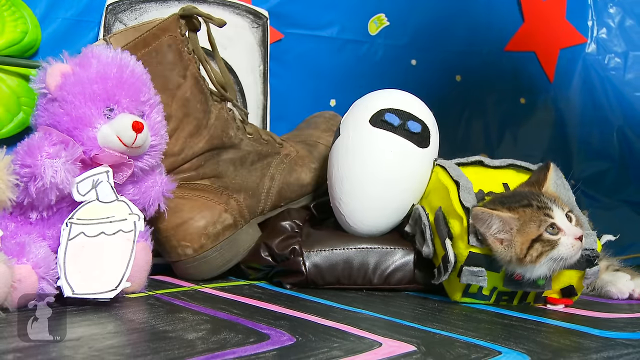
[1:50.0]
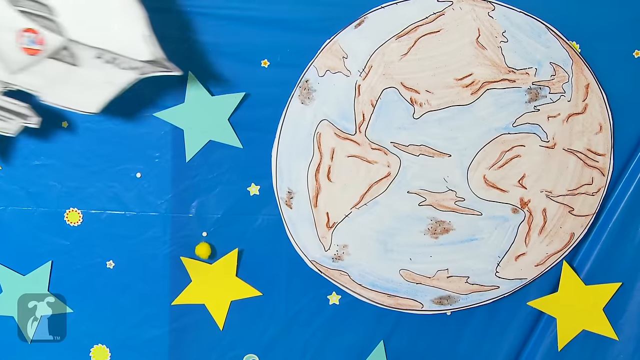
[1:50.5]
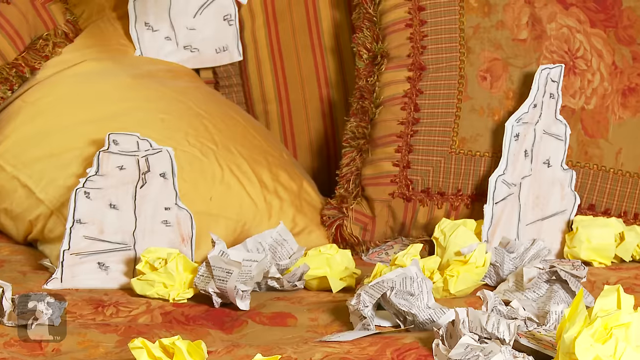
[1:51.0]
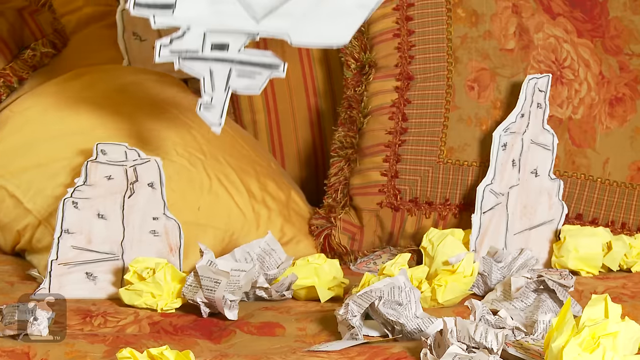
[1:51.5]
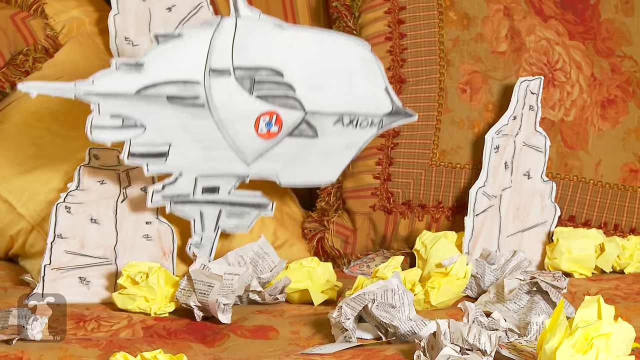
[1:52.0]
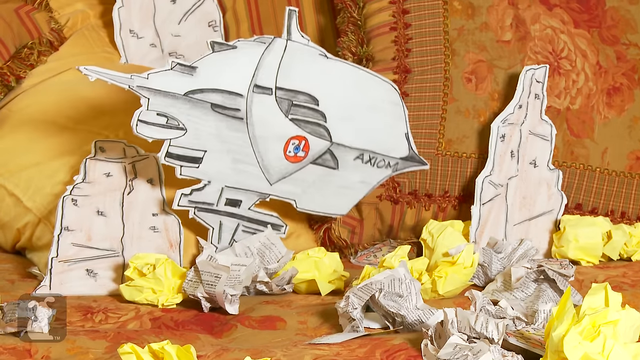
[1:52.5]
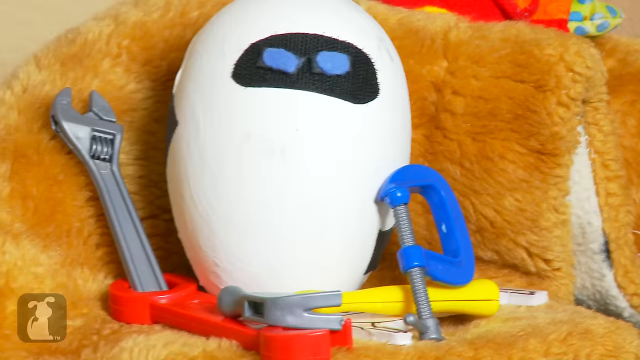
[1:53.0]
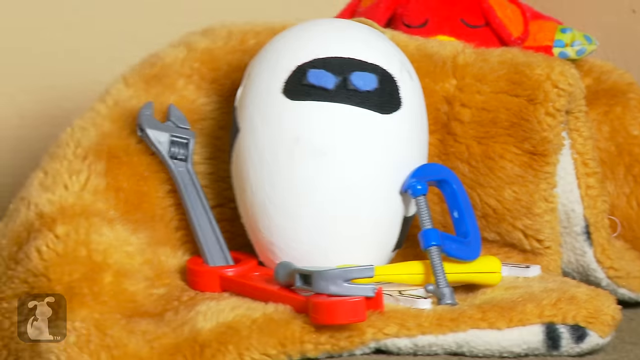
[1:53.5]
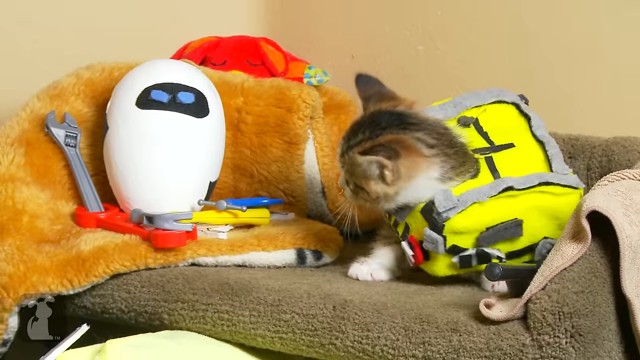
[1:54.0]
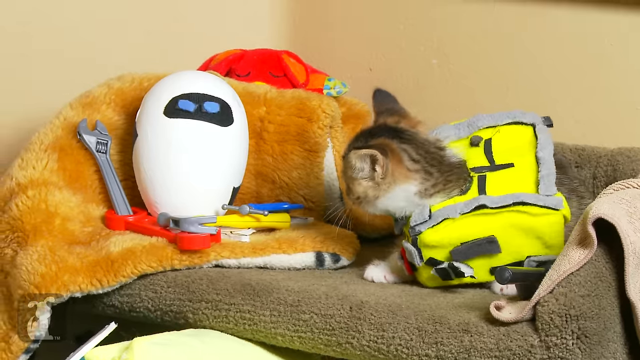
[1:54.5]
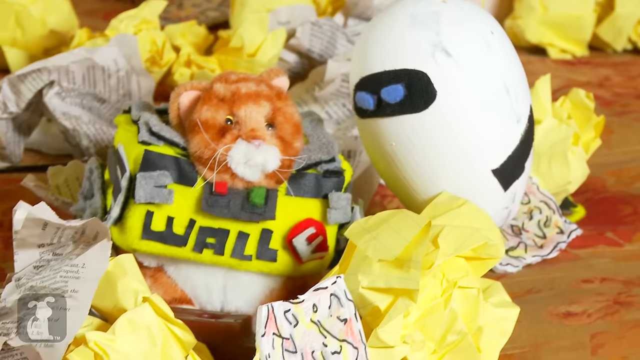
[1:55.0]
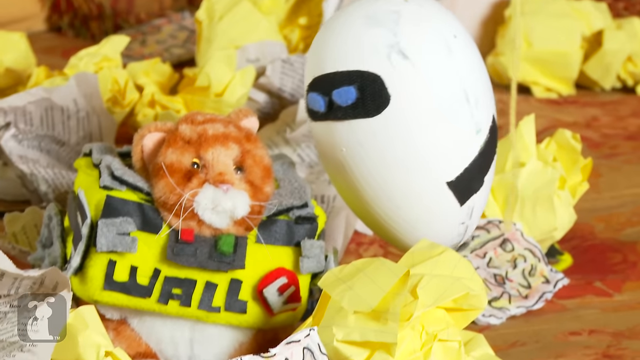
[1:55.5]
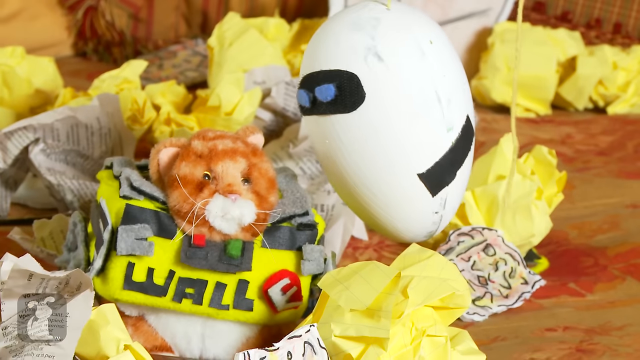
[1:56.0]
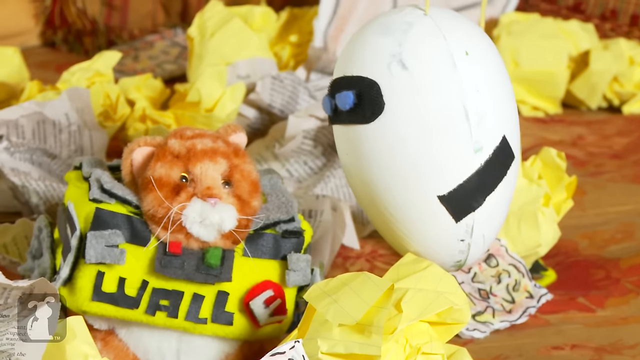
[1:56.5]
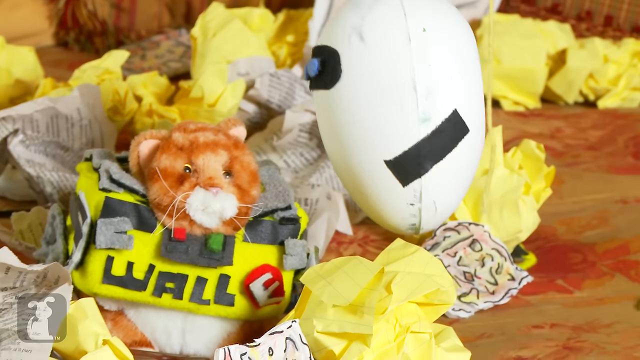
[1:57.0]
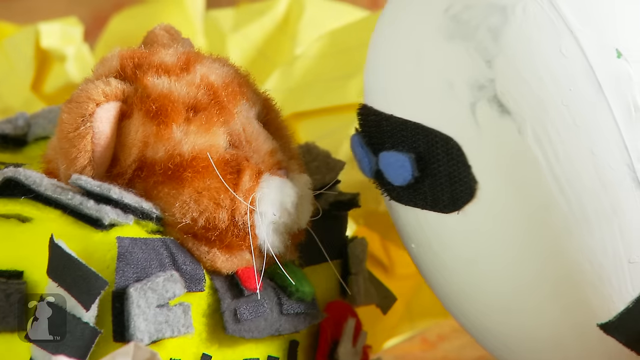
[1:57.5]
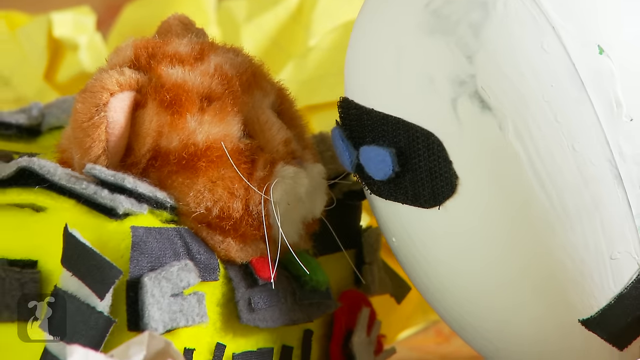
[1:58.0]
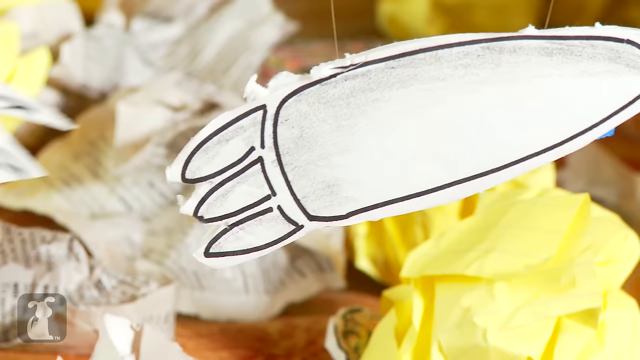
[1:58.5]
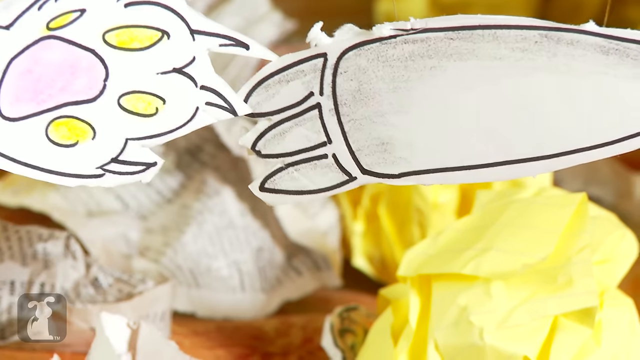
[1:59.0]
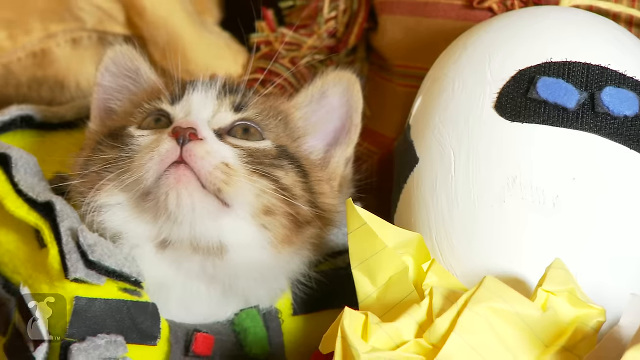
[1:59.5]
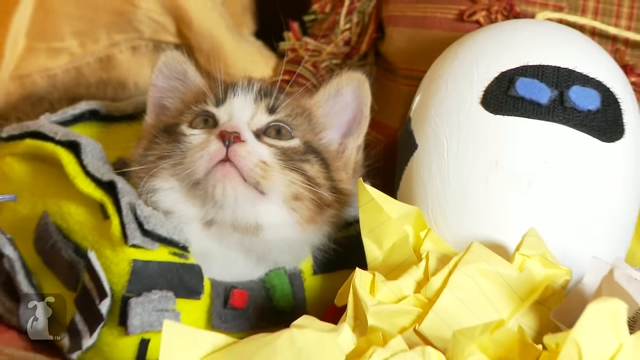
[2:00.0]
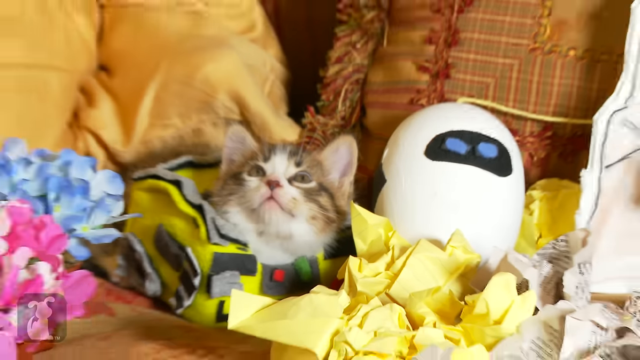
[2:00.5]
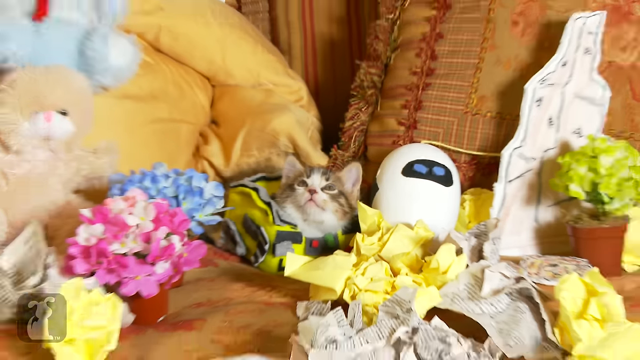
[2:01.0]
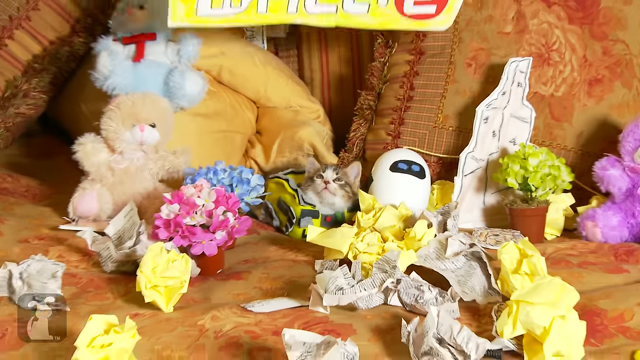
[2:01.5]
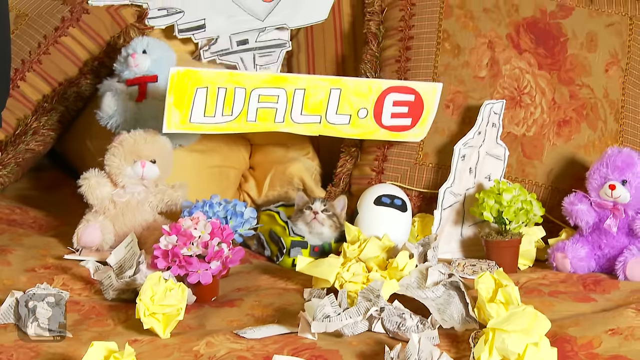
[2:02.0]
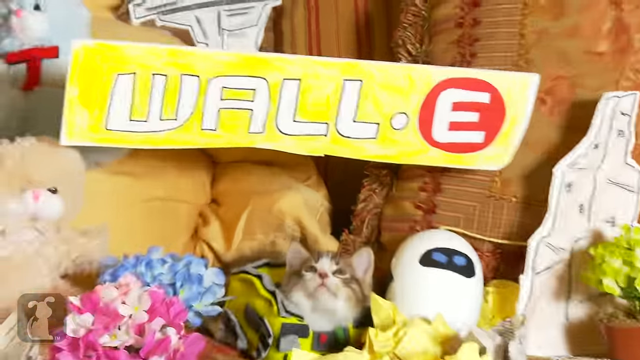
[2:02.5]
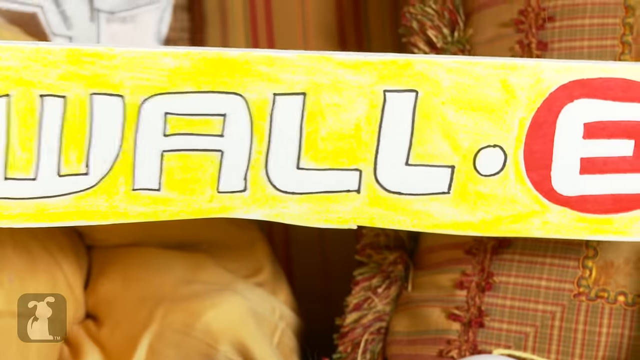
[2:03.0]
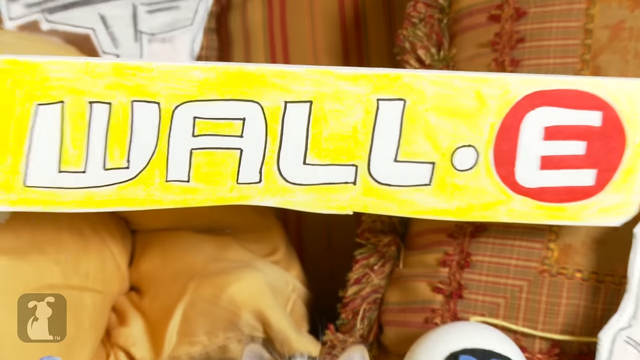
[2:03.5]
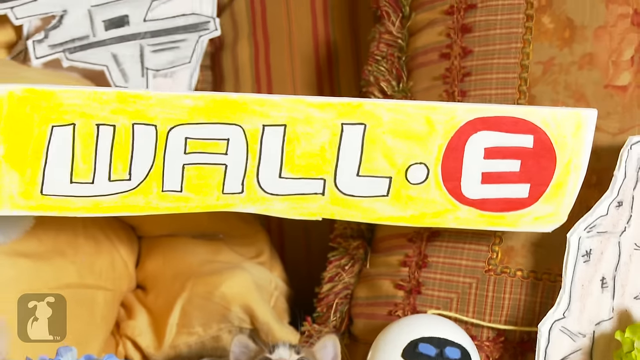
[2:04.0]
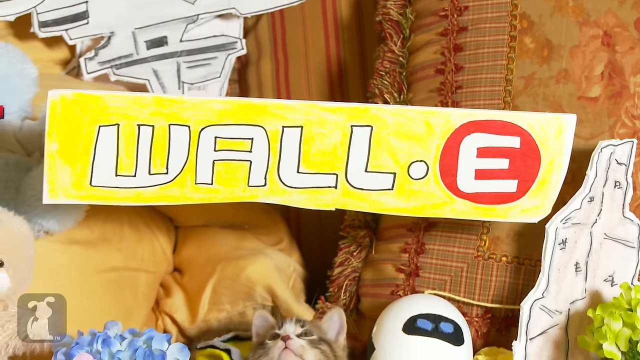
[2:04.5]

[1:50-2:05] The video cuts to an image of them riding in a spaceship, and they go to planet Earth, which is drawn in the same cartoonish, childish way. When they land on Earth there is a bunch of trash all over the place, along with buildings and different styles of plants. The plants are real or fake but not drawings, as are the rubble and everything else shown. The egg-shaped robot's tools come out, and it gives the cat a kiss. The cat almost does not look real here, looking almost like a puppet, and then the video cuts back to the real cat.